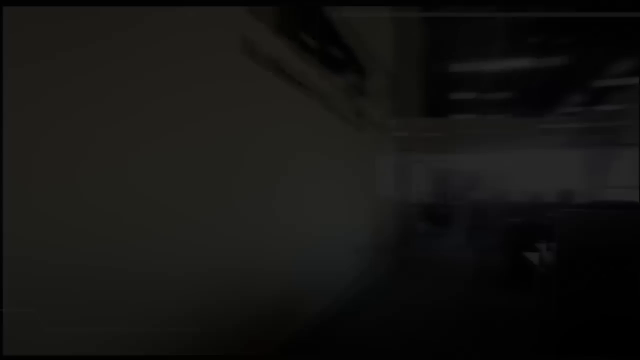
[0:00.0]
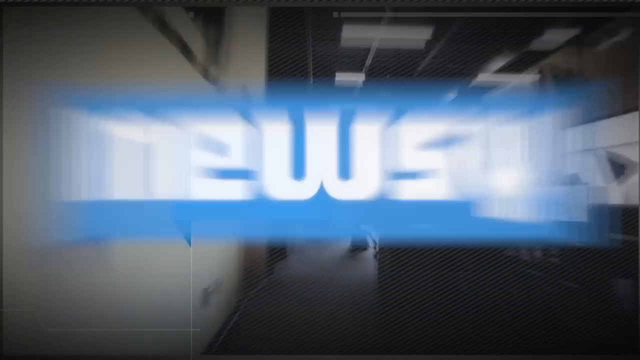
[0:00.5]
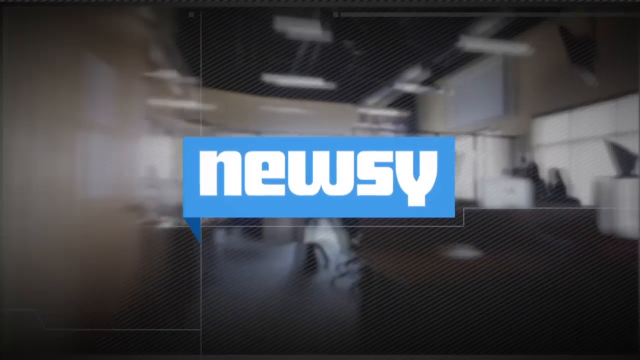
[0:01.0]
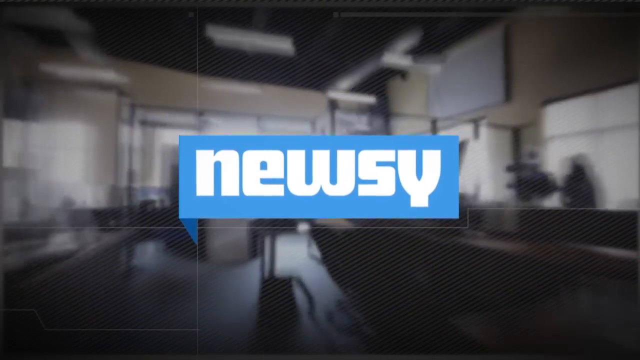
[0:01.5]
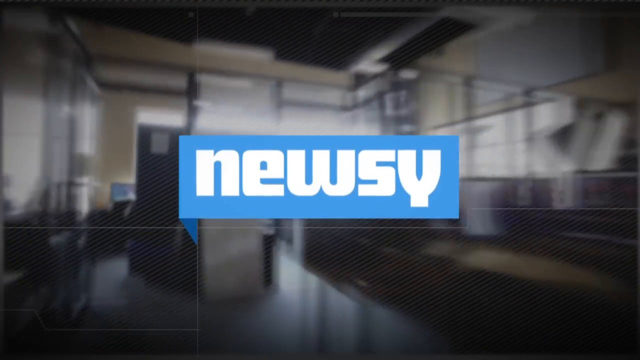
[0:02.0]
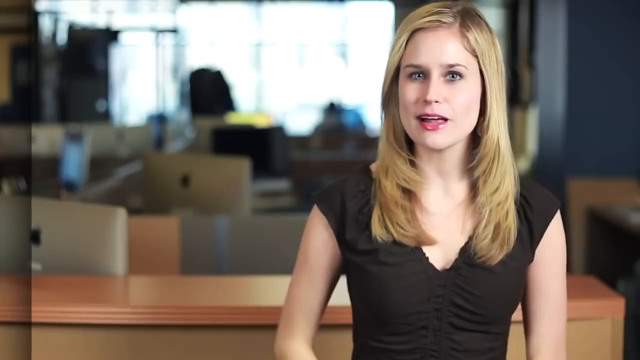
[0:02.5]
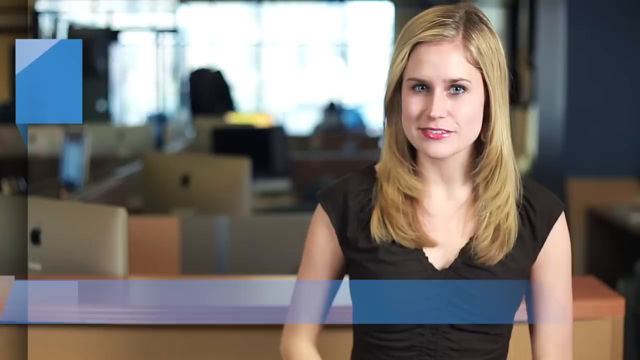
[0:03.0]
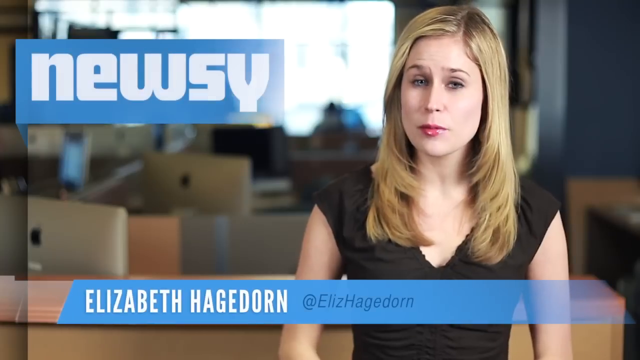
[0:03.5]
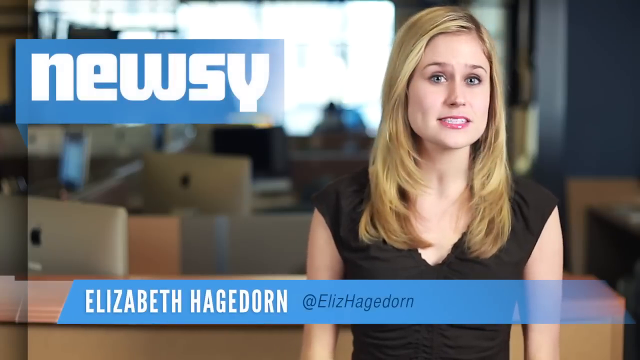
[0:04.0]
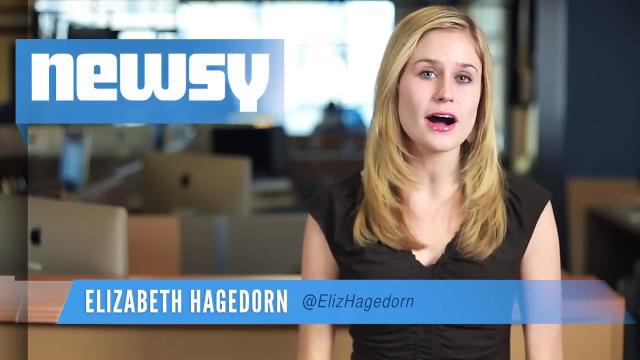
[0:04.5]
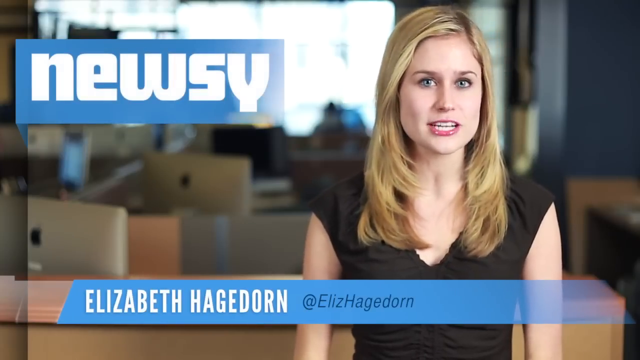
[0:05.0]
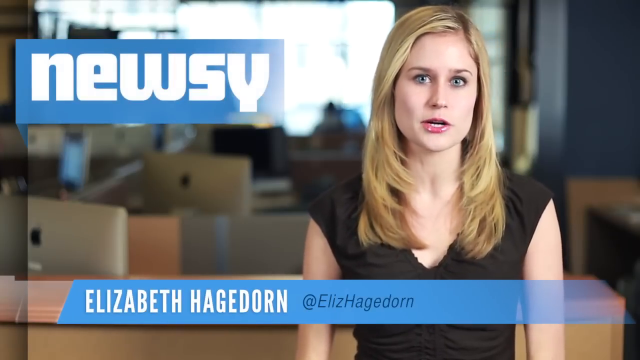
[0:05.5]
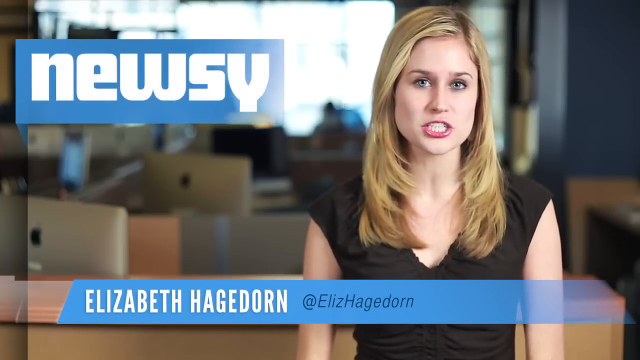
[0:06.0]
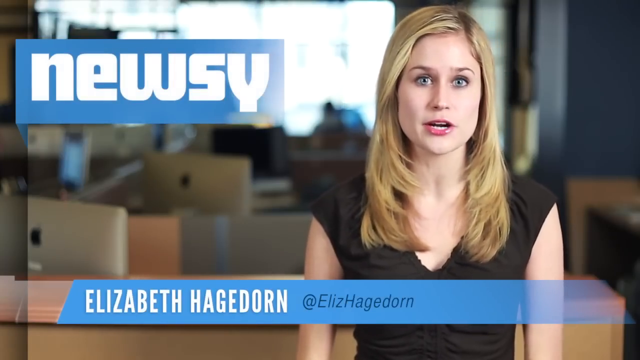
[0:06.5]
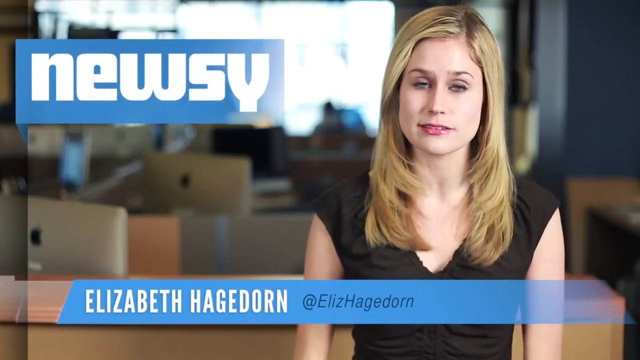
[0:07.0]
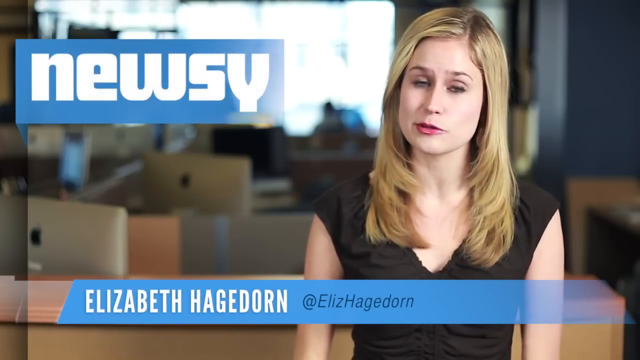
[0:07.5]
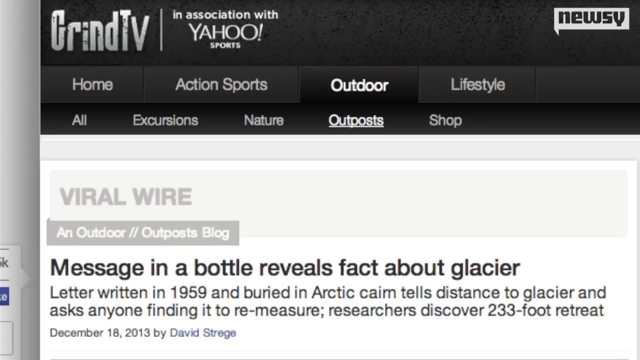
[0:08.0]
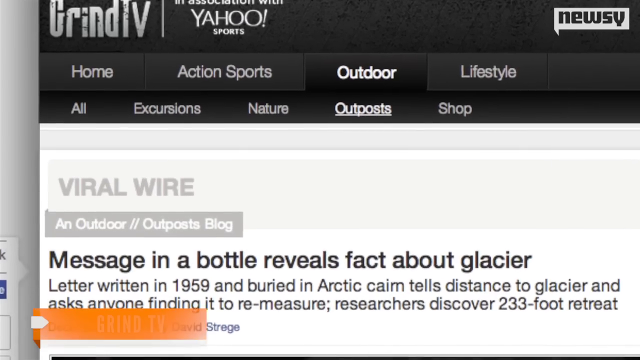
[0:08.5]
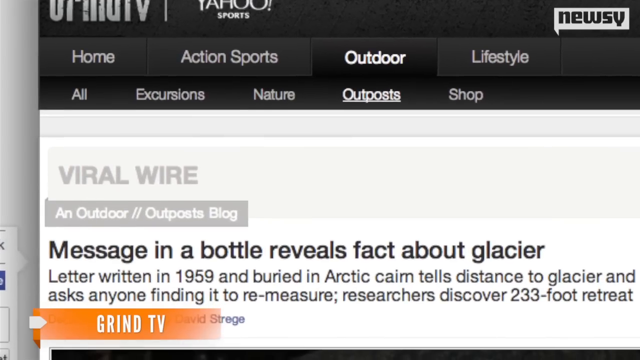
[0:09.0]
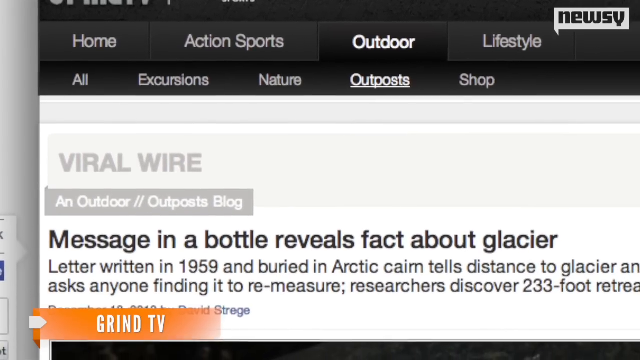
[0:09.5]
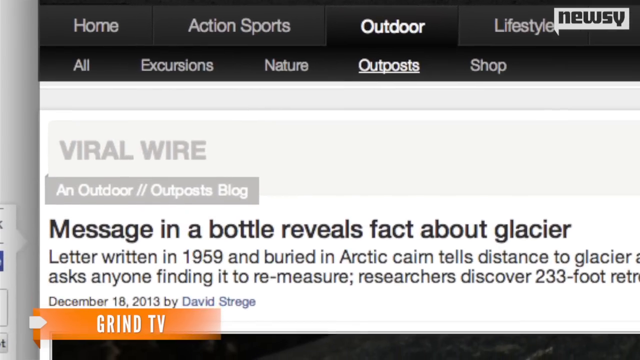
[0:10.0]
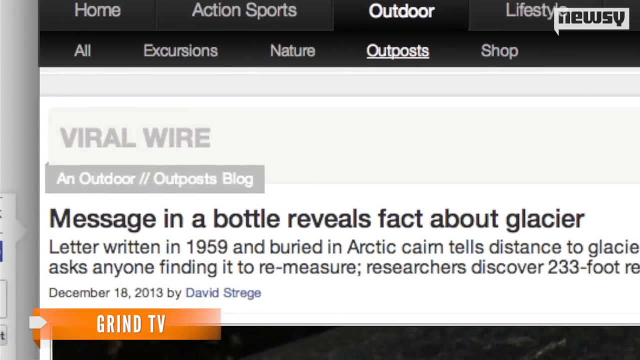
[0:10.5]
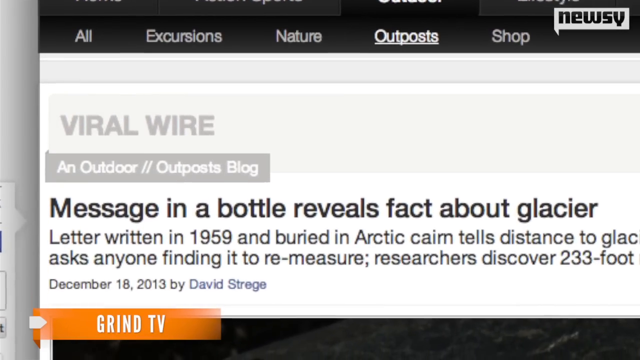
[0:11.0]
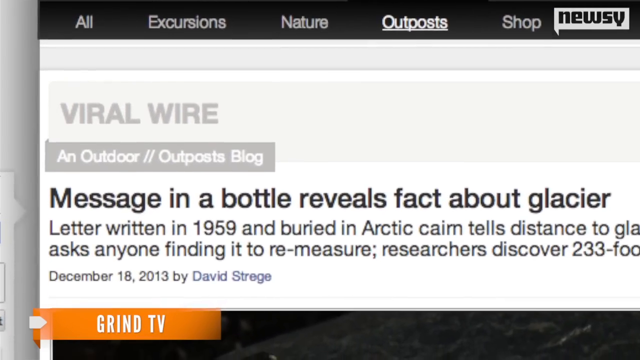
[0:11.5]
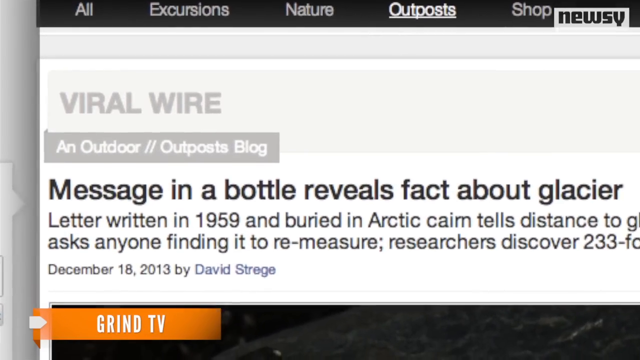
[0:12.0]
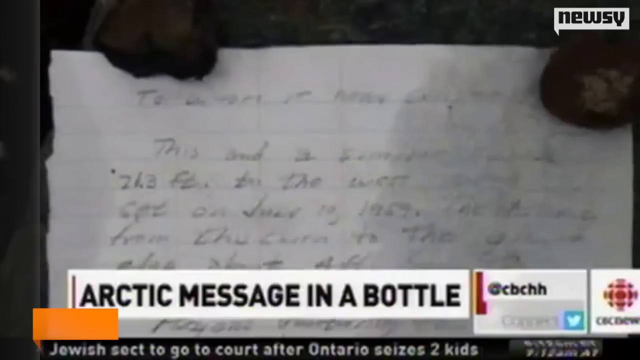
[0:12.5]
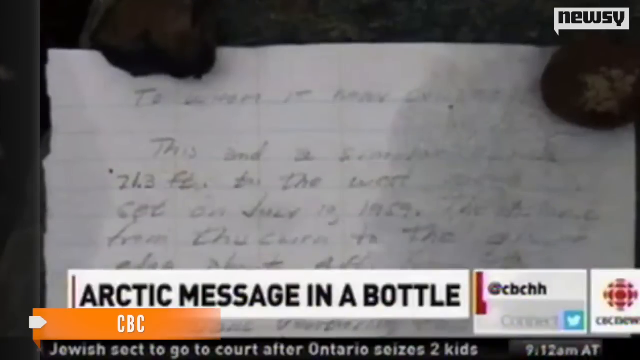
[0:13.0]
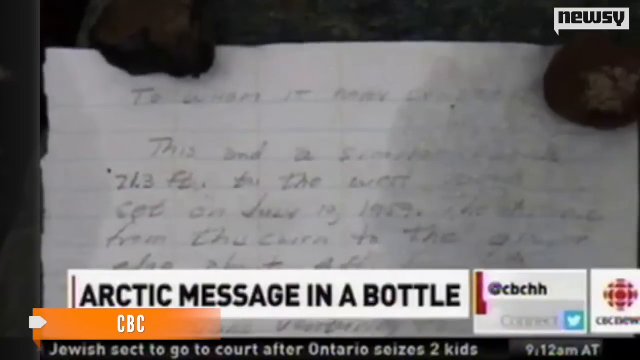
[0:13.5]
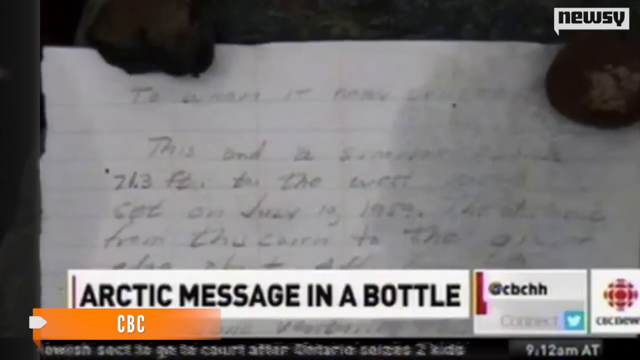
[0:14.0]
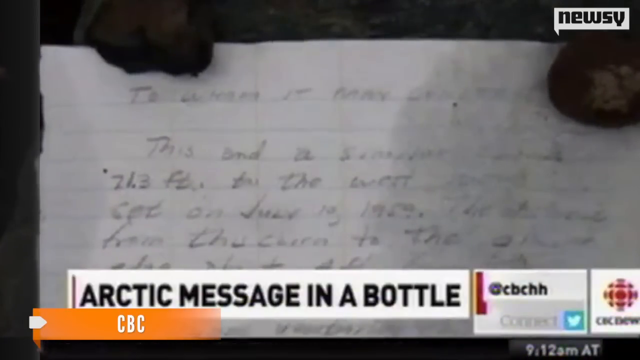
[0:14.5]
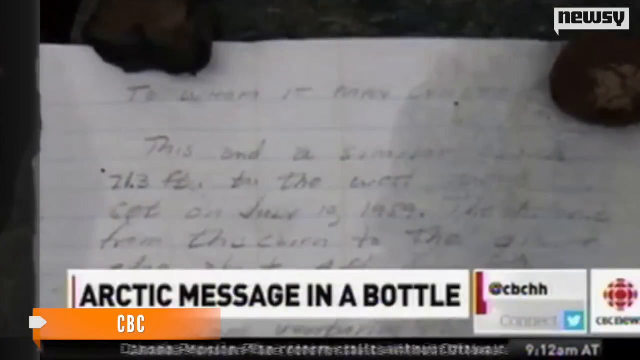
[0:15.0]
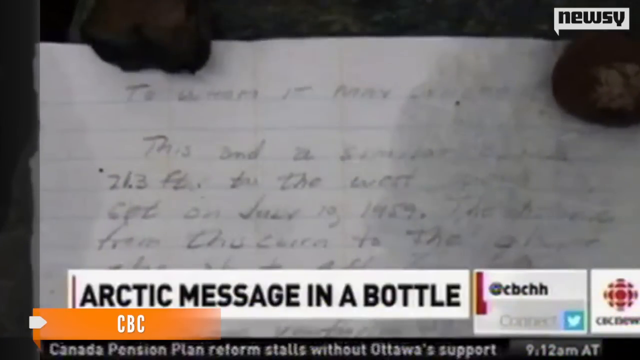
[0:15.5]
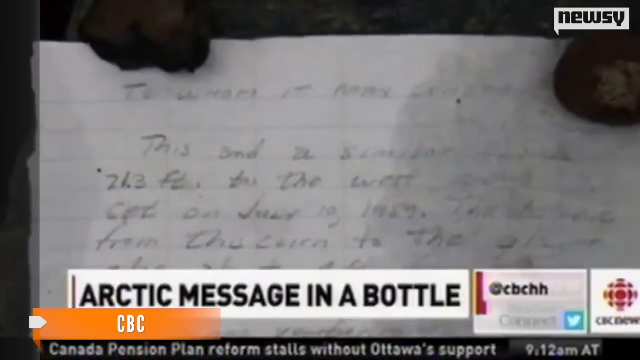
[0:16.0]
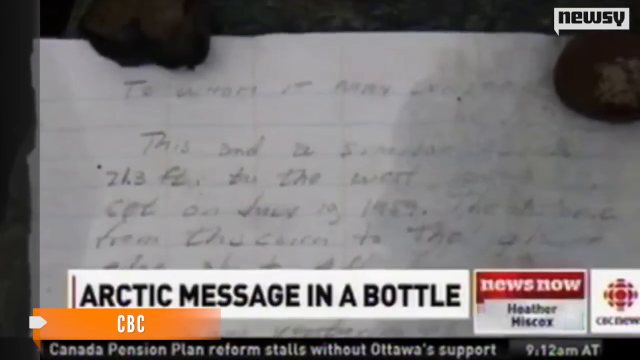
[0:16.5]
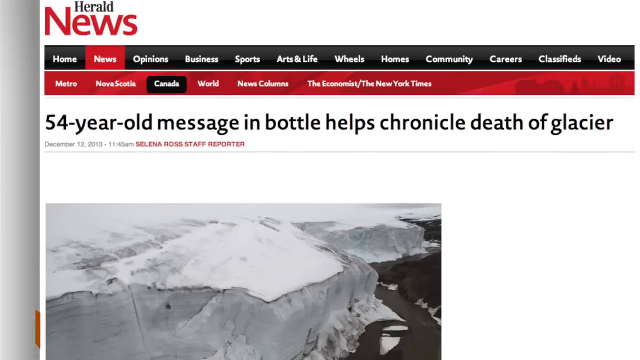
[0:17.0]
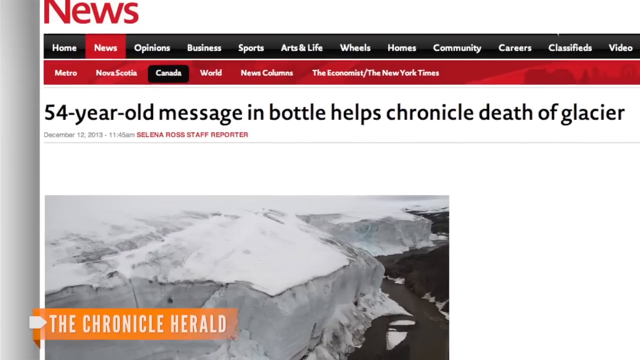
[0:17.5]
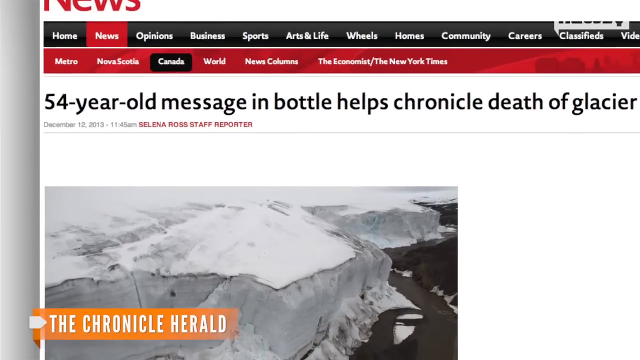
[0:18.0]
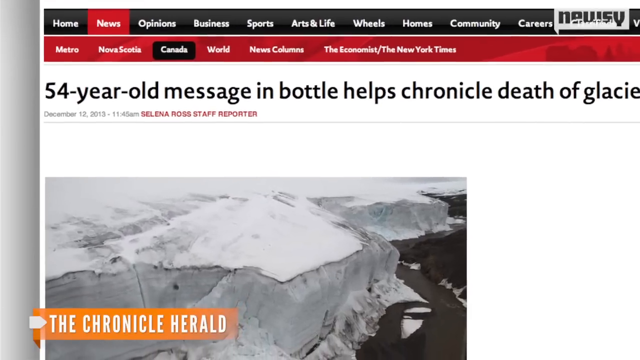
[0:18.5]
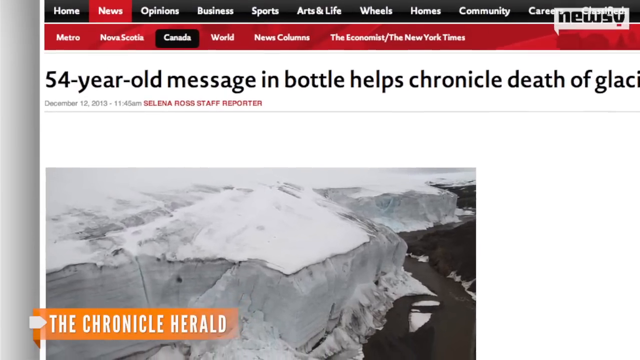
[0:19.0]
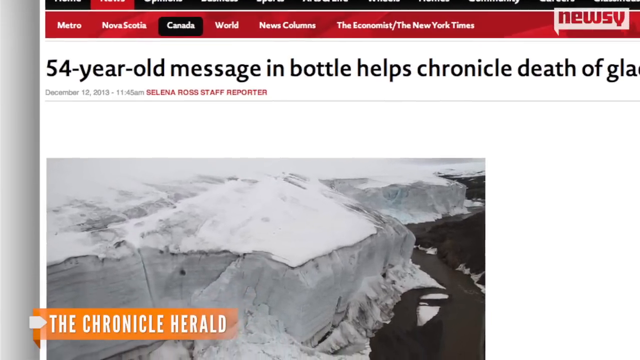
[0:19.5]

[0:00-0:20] The inside of a newsroom is shown quickly as the camera moves briskly through it, while the title "Newsy" appears in white font on a light blue background. The camera stops moving through the office and a woman is shown. She has blonde hair parted on the side and wears a black shirt. She is speaking, and the Newsy logo appears next to her head. At the bottom, "Elizabeth Hagedorn" appears in white font on a blue rectangular background. She speaks determinedly and confidently toward the camera; she does not gesture with her hands, but her head turns to the side when she makes a point. The screen then changes to a website that reads "viral wire" and "message in a bottle reveals fact about a glacier." The camera zooms in on the words, which say "a letter was written in 1959 and buried in arctic." The rest of one line is cut off, but it continues "ask anyone finding it to remeasure" and "researchers discover a 233 foot retreat." A picture of the letter follows, with "Arctic message in a bottle" at the bottom; the handwriting on the letter is very faint. Another website then appears, reading "50 year old message in bottle helps chronicle death of glacier," and a picture of a glacier is shown.